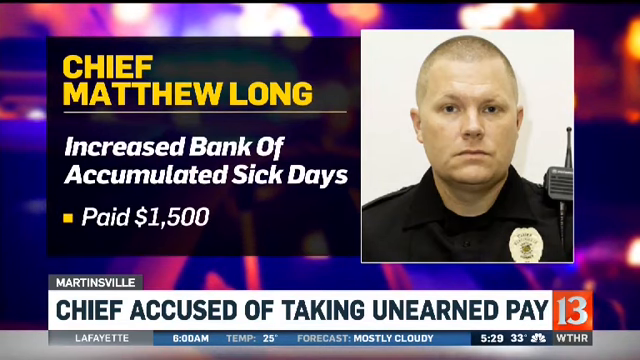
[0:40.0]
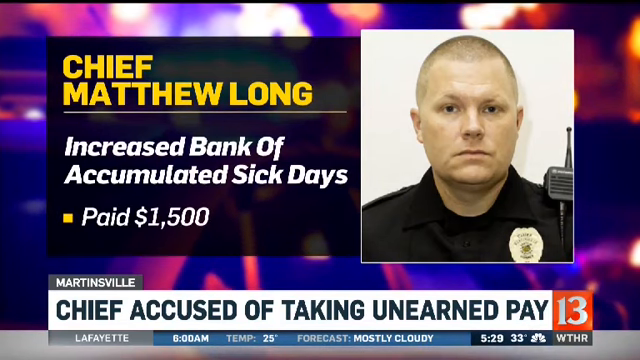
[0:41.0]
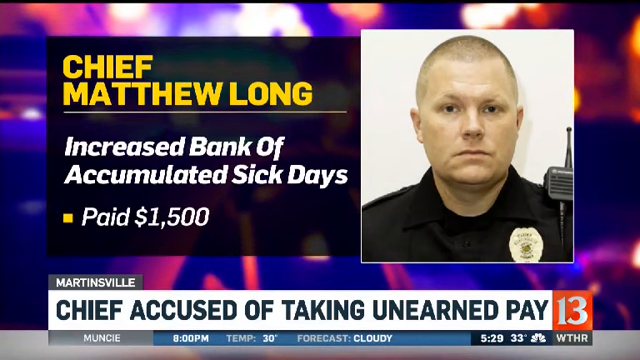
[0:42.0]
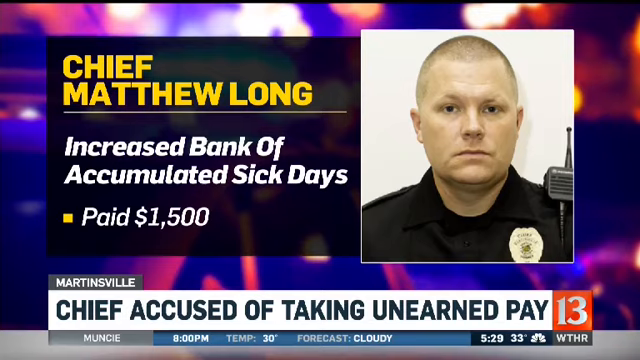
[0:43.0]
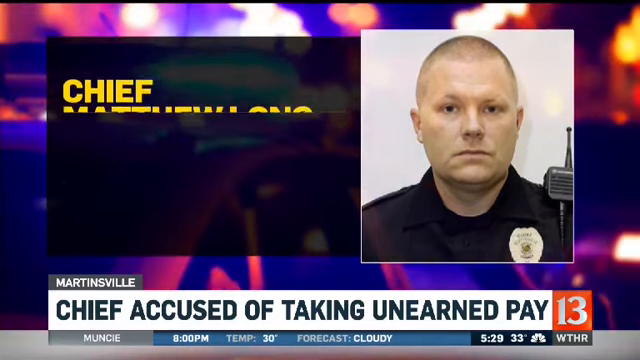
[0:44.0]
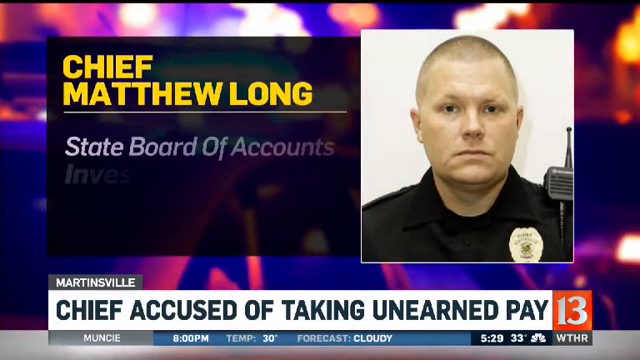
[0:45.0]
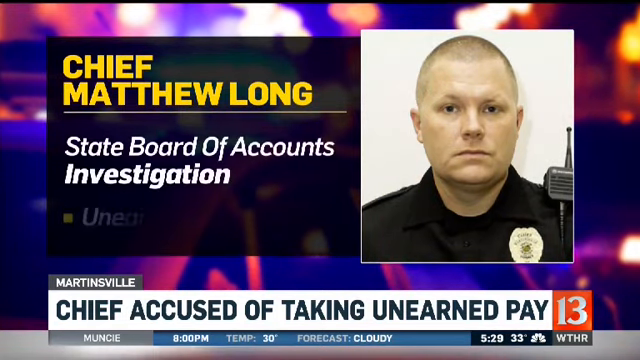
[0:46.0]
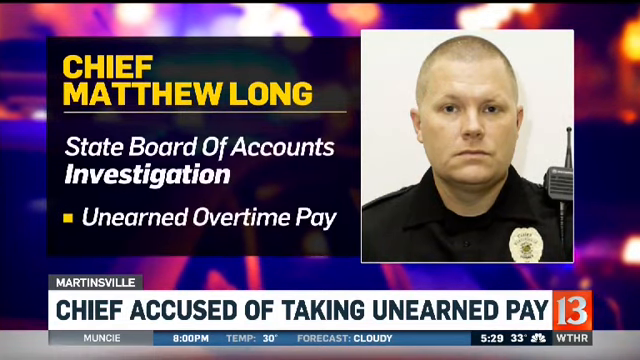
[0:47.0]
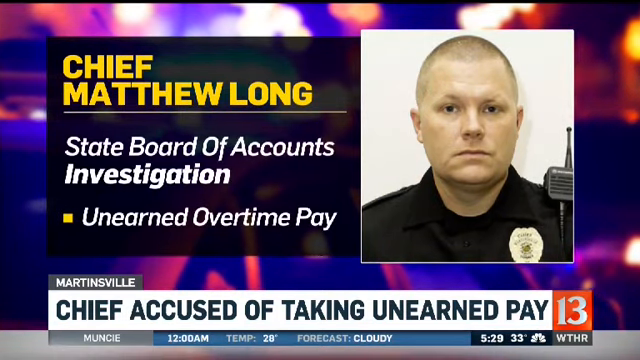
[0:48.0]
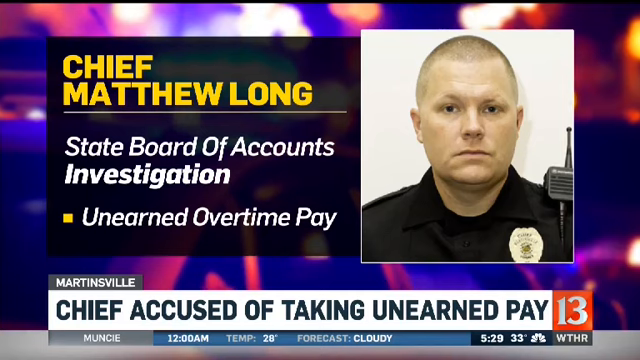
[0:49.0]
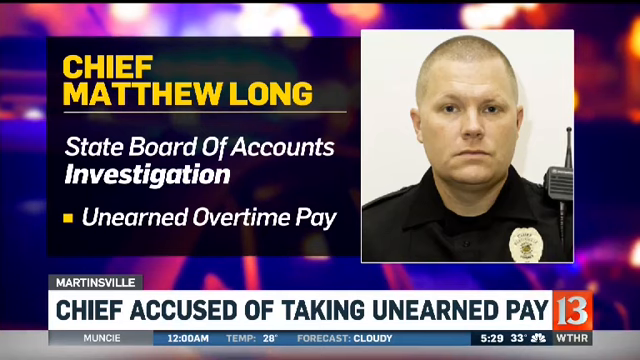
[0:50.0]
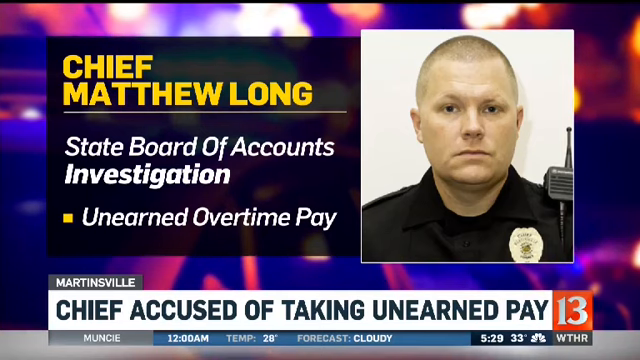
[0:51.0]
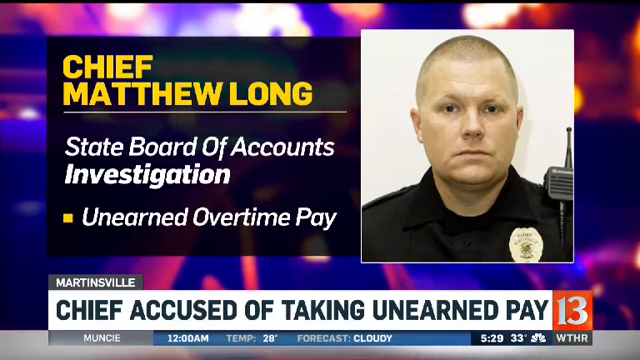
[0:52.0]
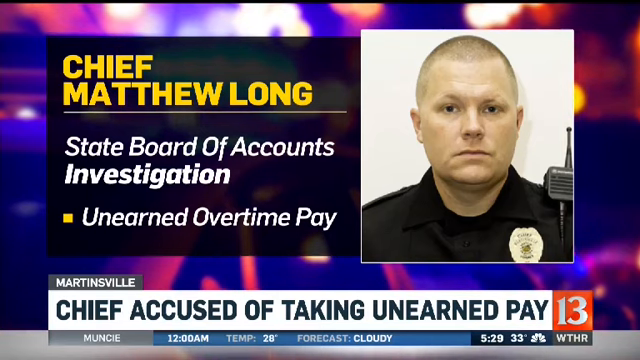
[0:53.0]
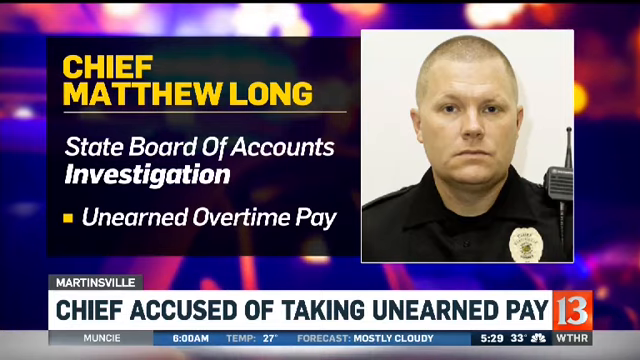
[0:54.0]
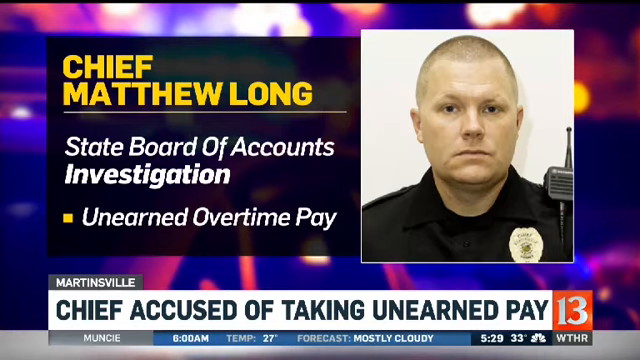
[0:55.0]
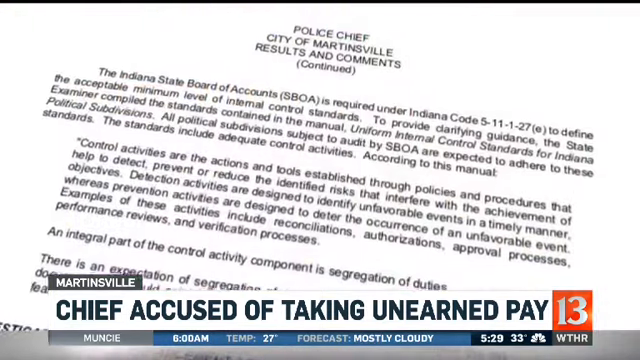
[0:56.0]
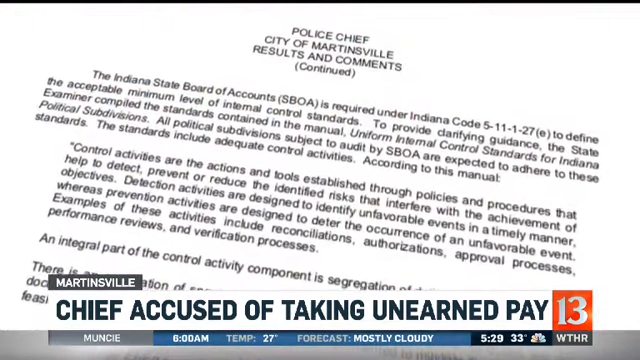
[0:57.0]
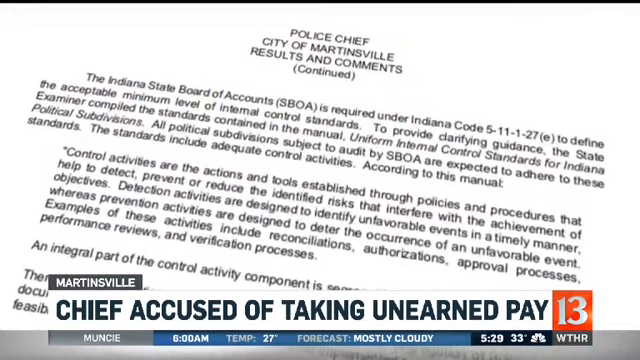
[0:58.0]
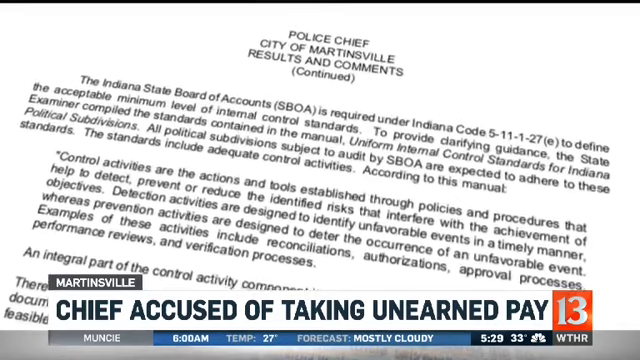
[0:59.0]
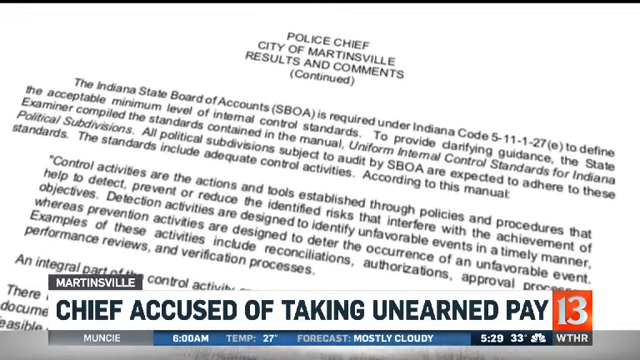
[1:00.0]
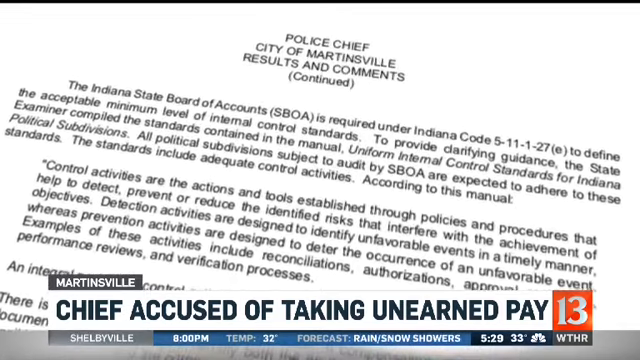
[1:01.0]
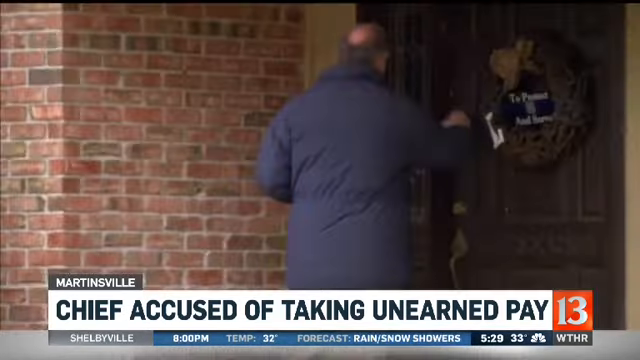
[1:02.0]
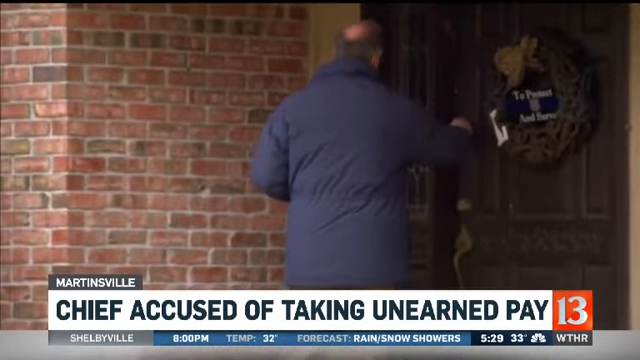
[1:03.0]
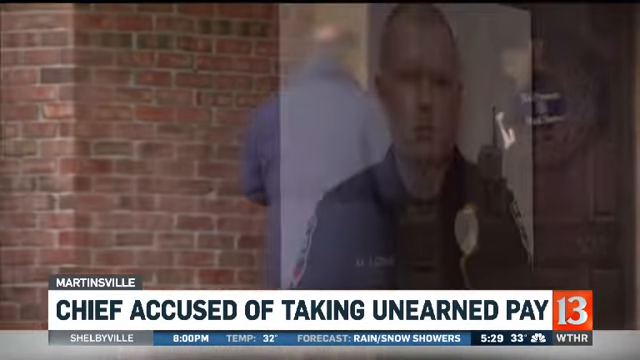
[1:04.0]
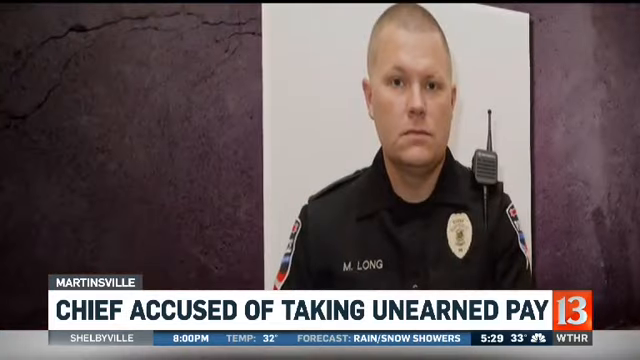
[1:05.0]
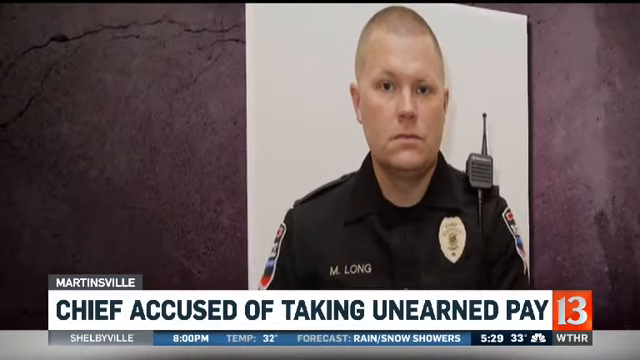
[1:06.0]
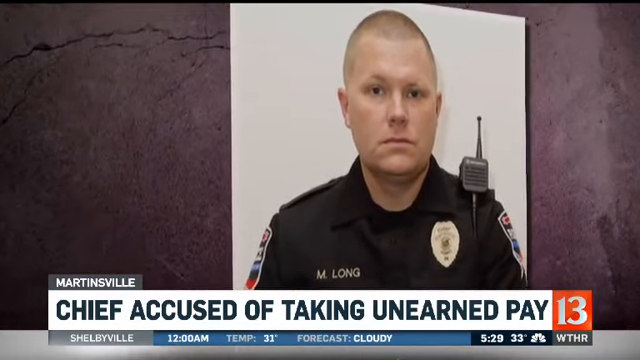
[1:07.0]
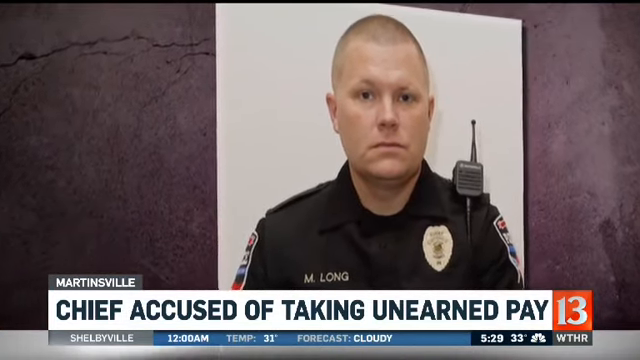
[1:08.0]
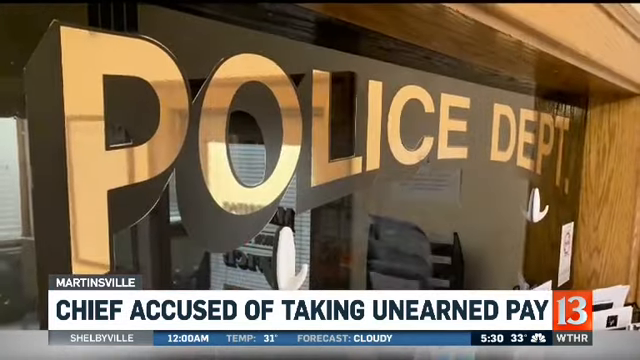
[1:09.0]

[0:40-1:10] The screen stays on the officer and the chart, and then the text changes to read "State Board of Accounts Investigation" and "unearned overtime pay." The video cuts back to the state board of accounts statement on a physical white piece of paper, then to what looks like the news reporter from earlier knocking on someone's door. It cuts back to the police officer's photo, this time kind of zooming and panning to the left, with the photo angled slightly, tilted to the side of the screen. The video then cuts to stock or still footage of a police department building, with the editing zooming in, and the words "police department" appear in a gold font with a black outline that gives the text layers, making it look almost 3D.